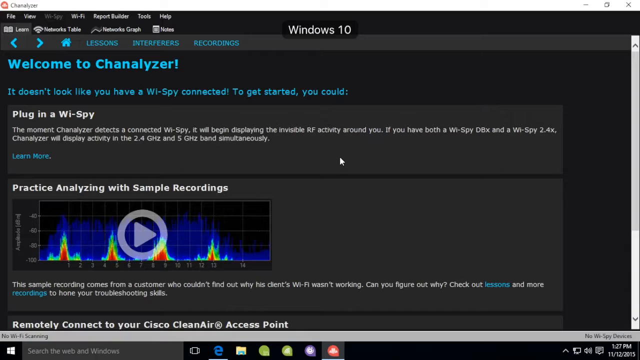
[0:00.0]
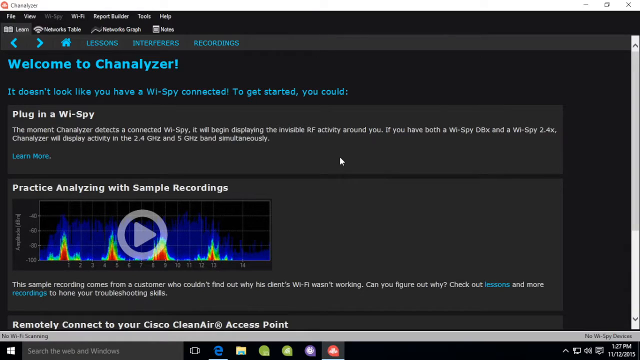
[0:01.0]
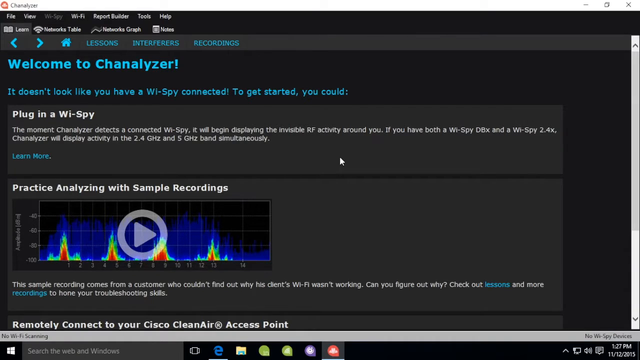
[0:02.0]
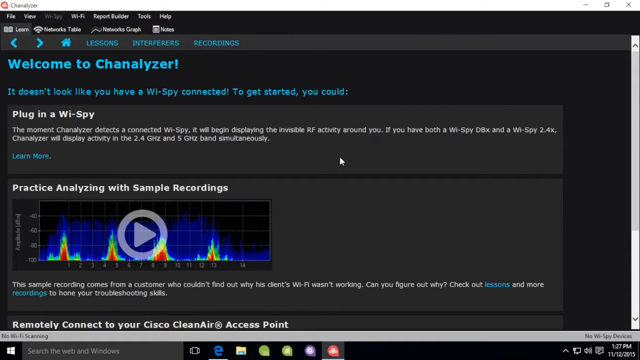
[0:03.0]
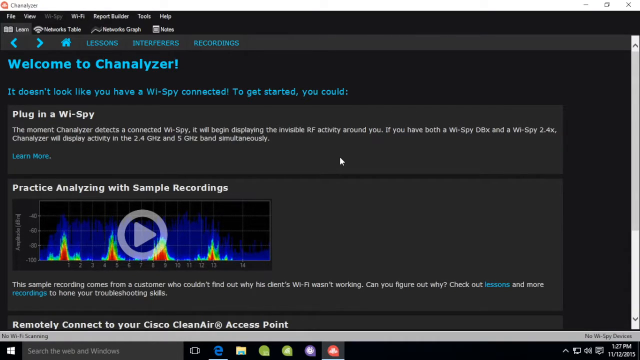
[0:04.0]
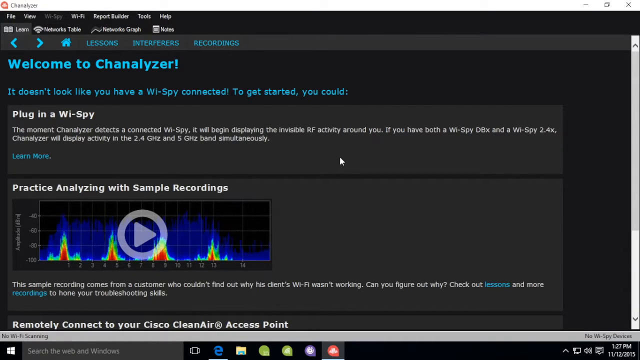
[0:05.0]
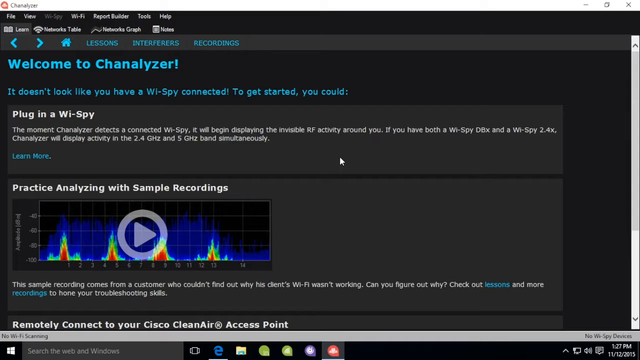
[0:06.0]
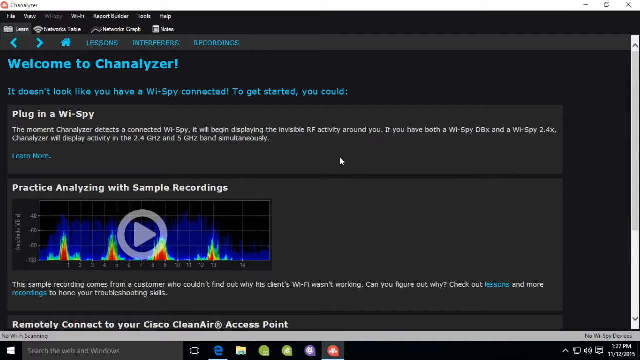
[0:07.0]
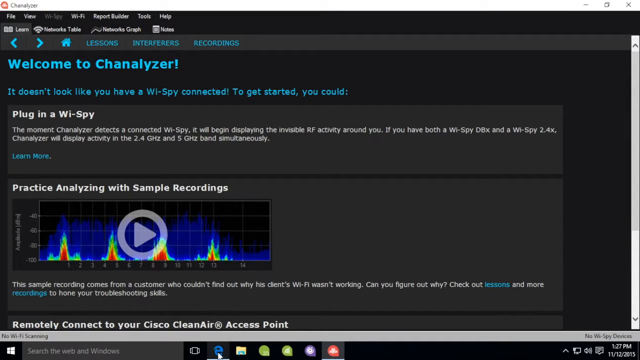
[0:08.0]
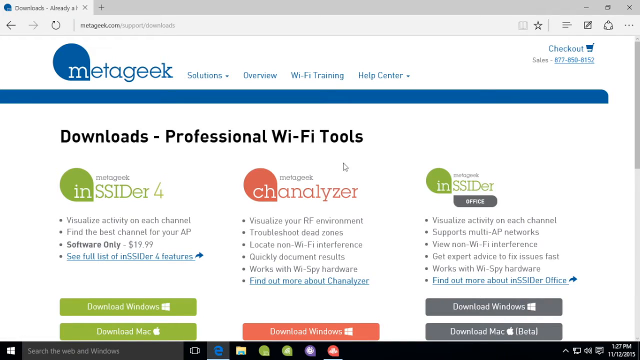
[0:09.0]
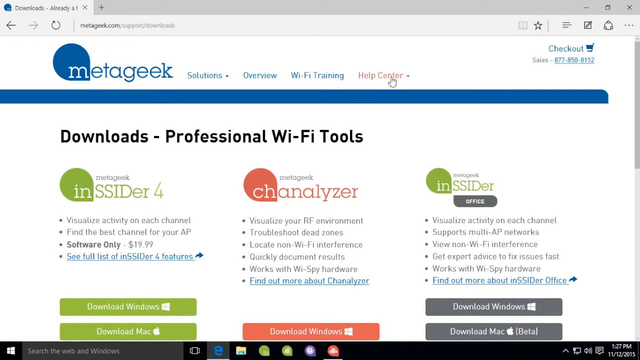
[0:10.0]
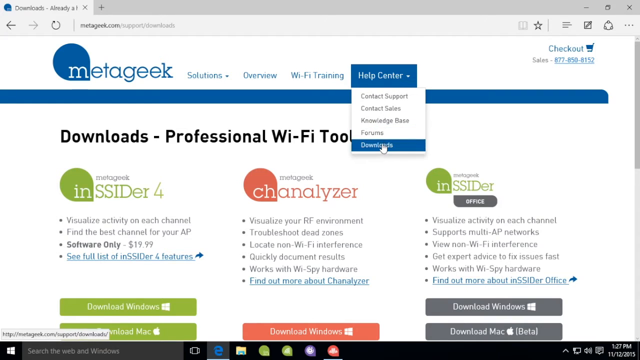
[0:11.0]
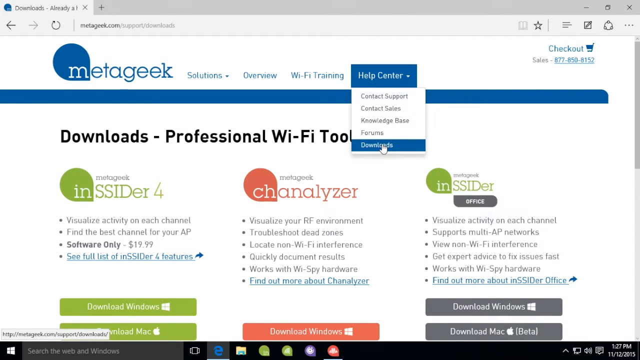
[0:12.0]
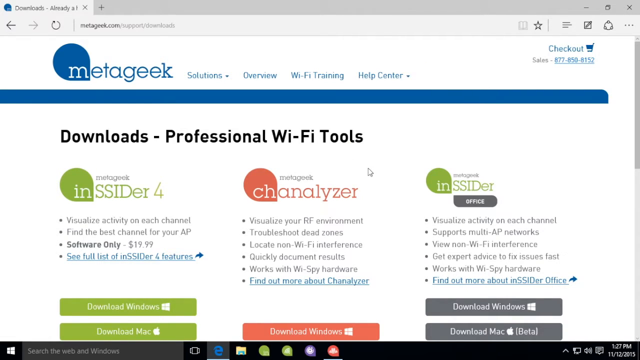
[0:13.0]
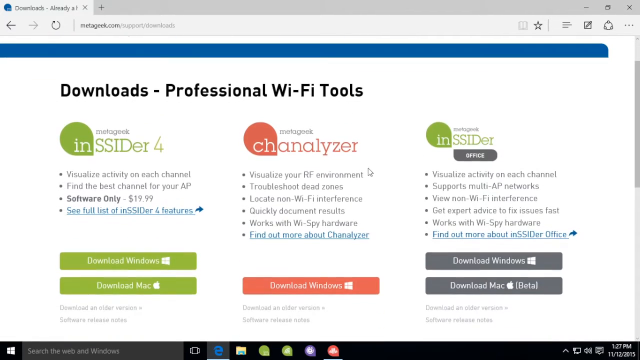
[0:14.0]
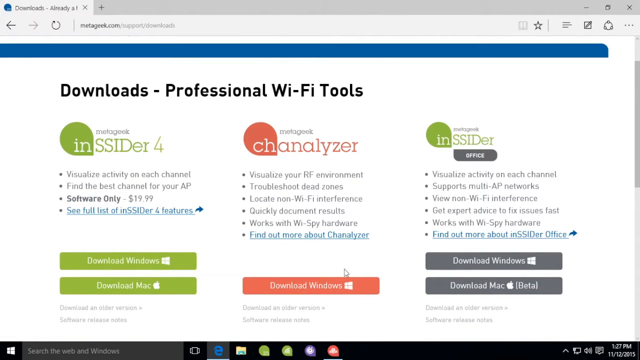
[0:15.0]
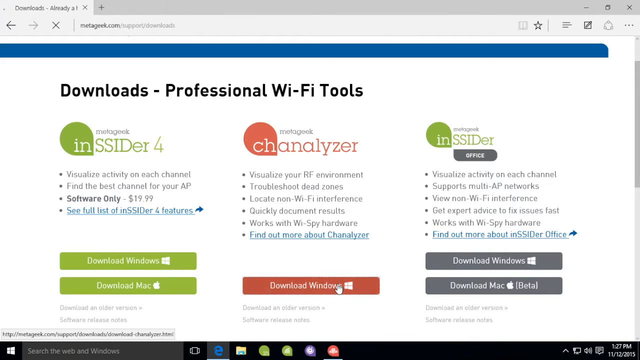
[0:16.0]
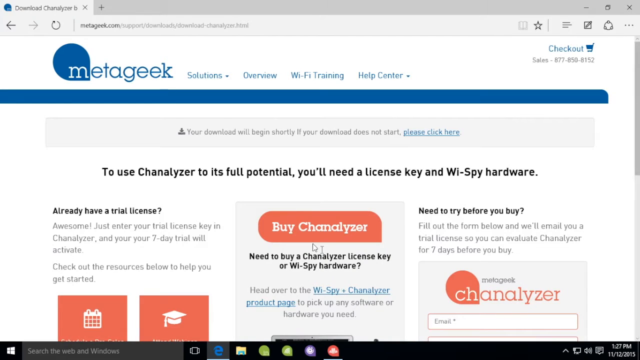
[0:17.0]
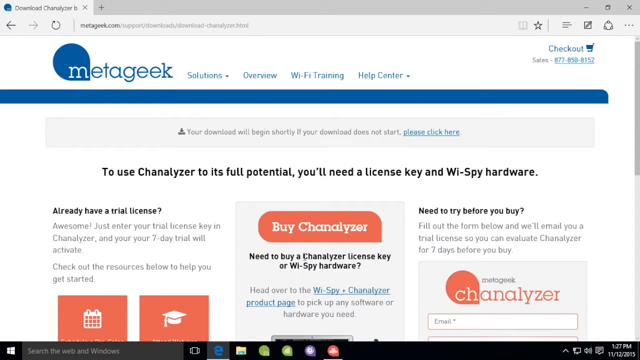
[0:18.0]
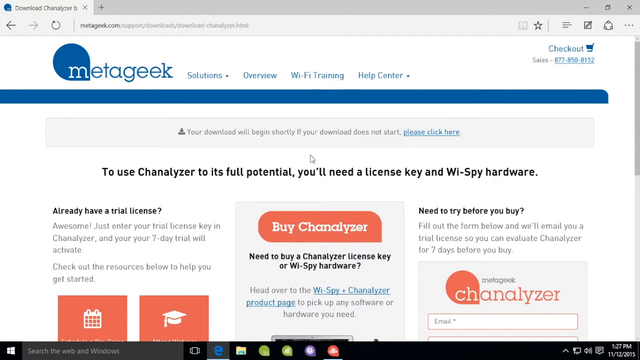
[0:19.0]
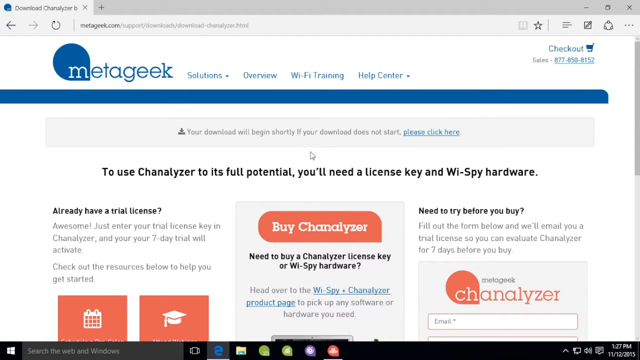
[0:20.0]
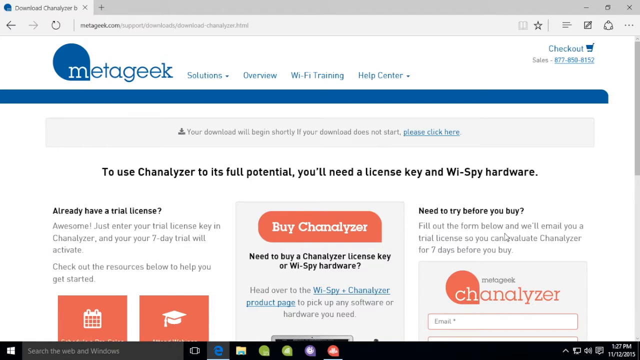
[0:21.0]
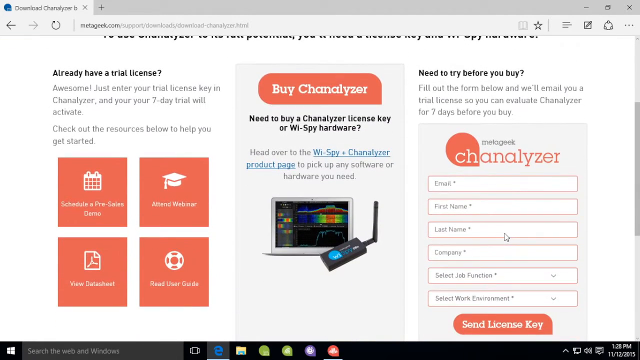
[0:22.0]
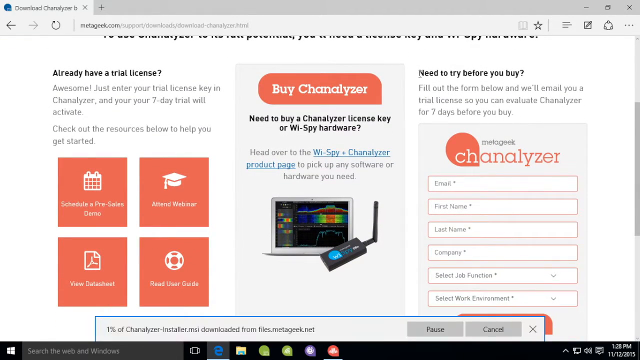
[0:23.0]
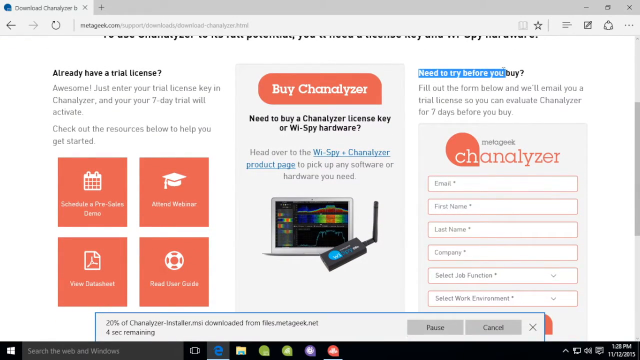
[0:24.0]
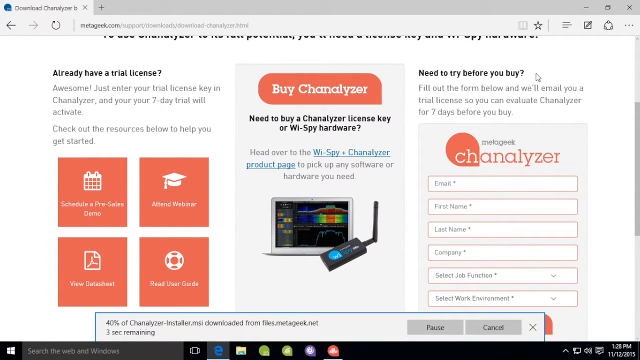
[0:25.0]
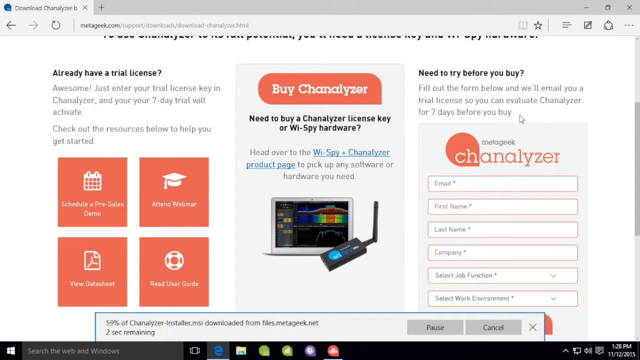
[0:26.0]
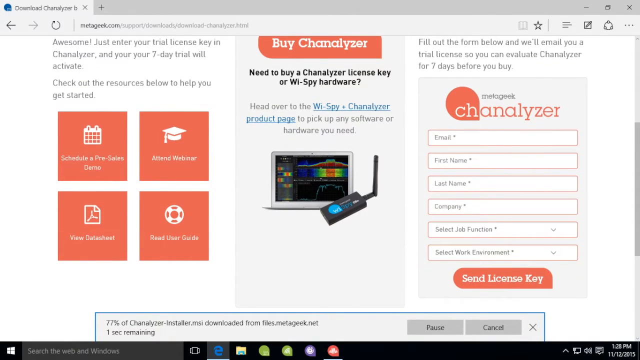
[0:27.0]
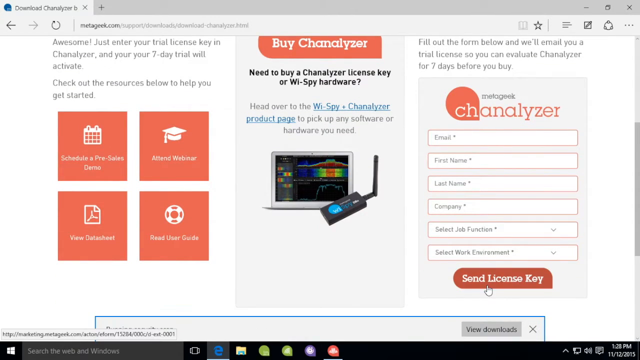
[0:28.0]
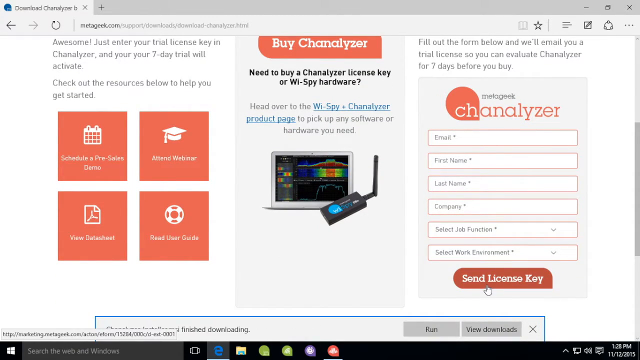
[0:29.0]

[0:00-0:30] The video opens with the Chanalyzer application and a website page for Chanalyzer and Wi-Spy, including a link to the Wi-Spy and Chanalyzer product page. On the screen are various spots on the site and a "try before you buy" option for a 7-day free trial, with a form asking for an email address, first name, last name, company, job and other details, and a submit button for getting trial access to the Wi-Spy products.